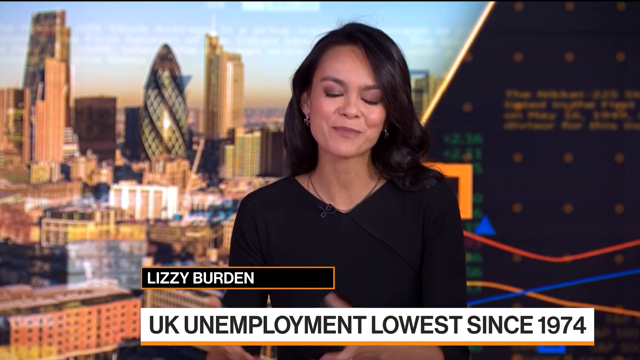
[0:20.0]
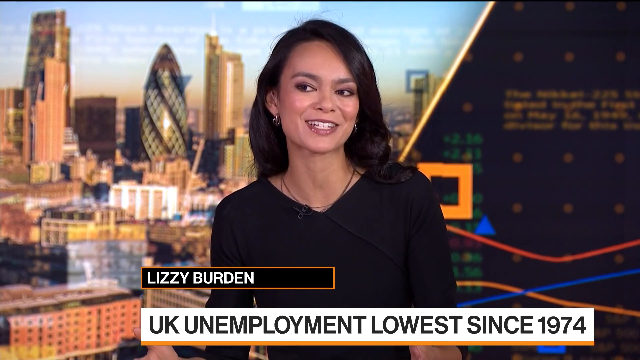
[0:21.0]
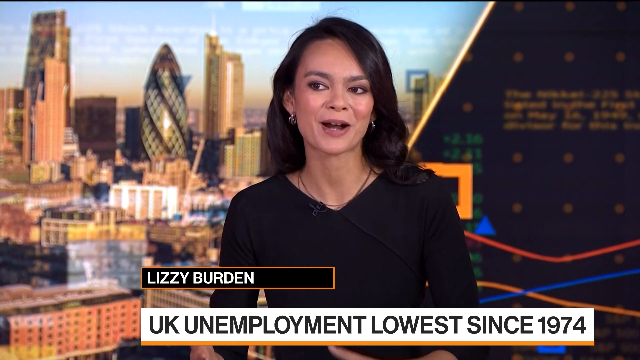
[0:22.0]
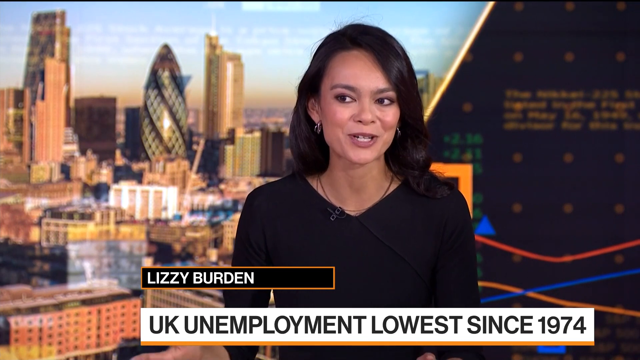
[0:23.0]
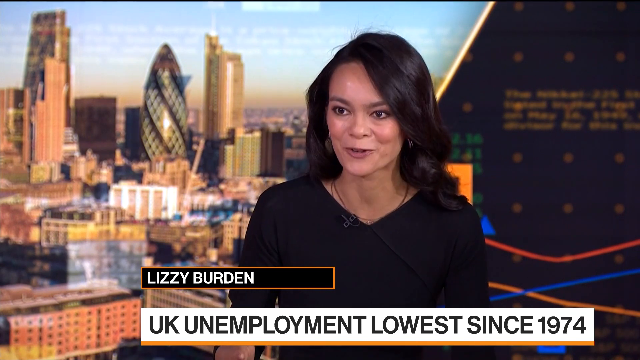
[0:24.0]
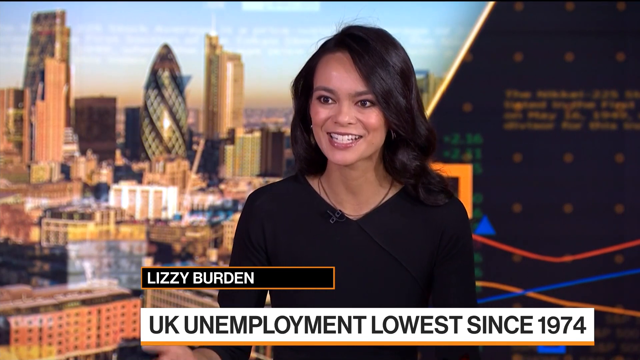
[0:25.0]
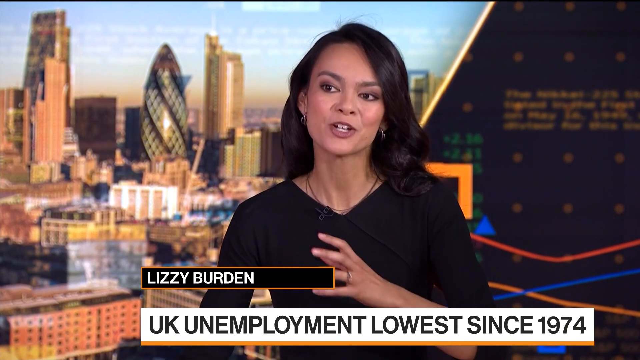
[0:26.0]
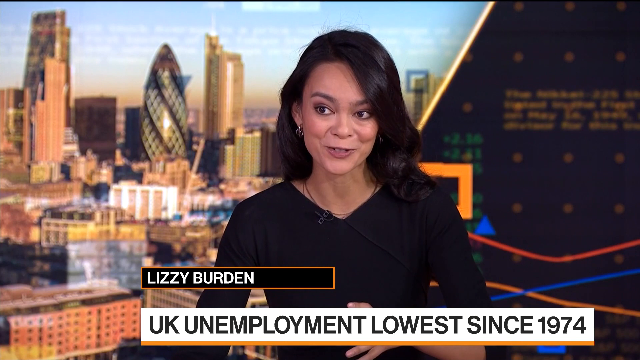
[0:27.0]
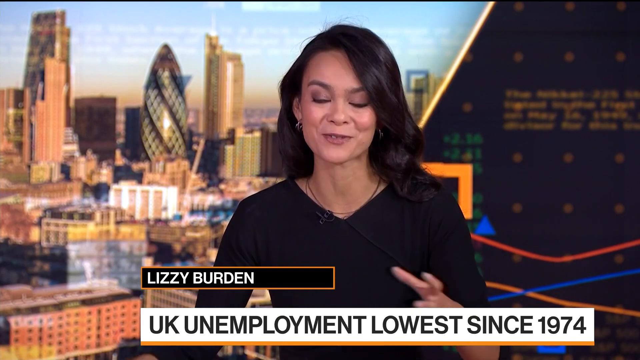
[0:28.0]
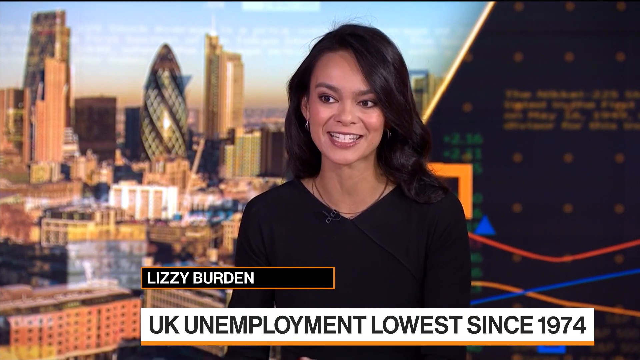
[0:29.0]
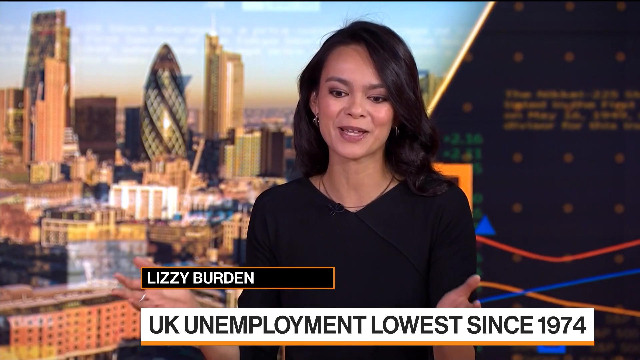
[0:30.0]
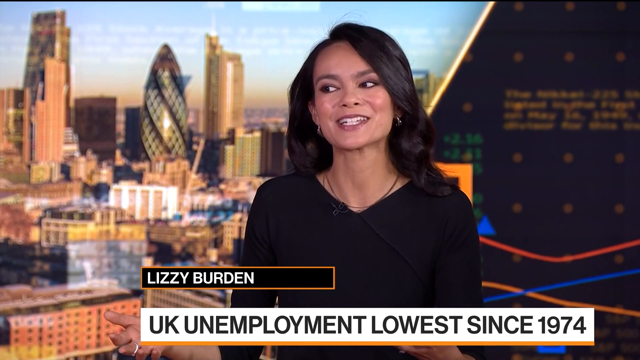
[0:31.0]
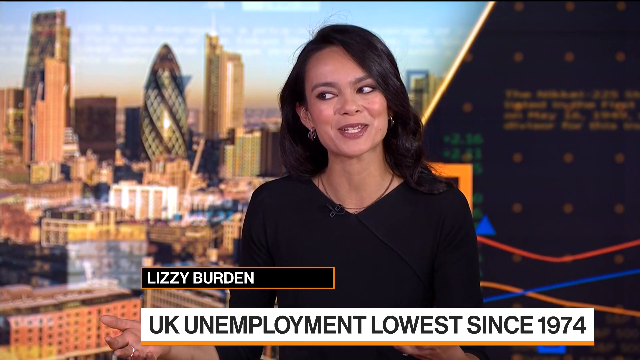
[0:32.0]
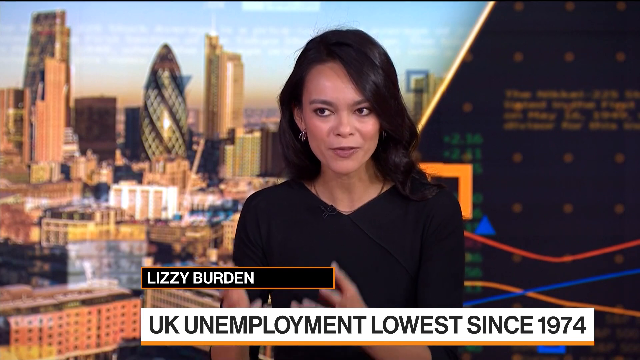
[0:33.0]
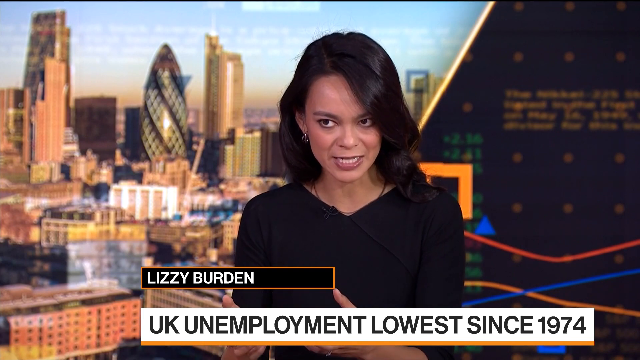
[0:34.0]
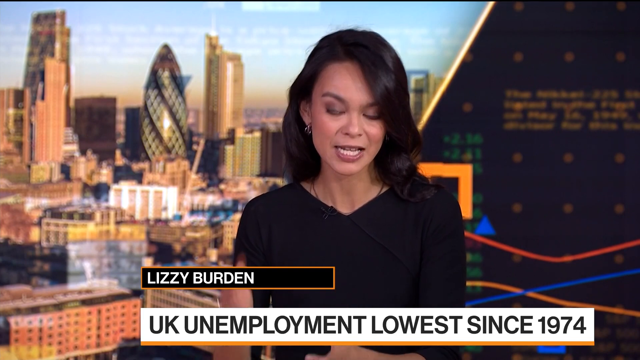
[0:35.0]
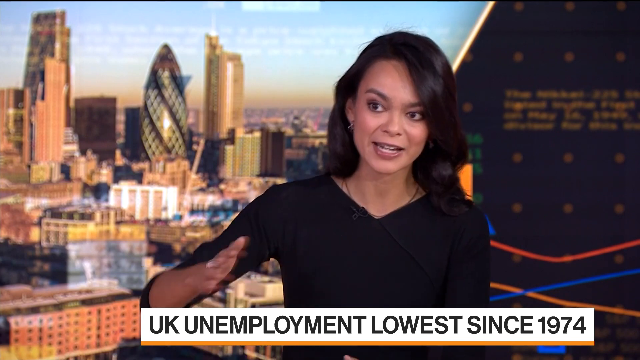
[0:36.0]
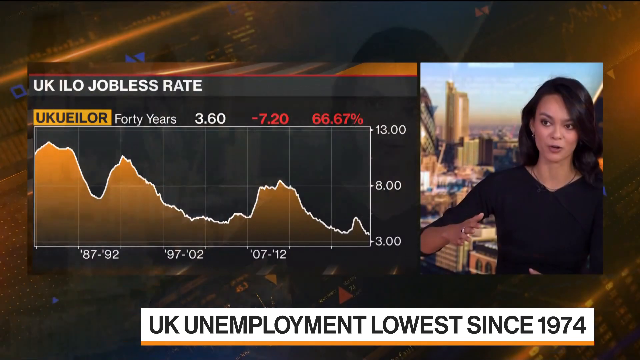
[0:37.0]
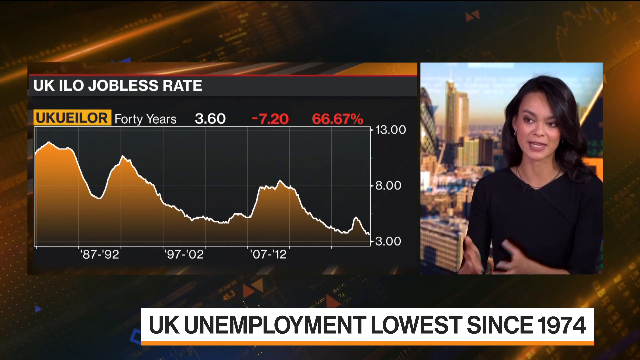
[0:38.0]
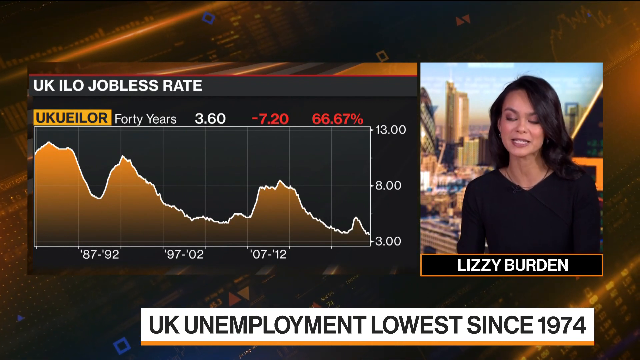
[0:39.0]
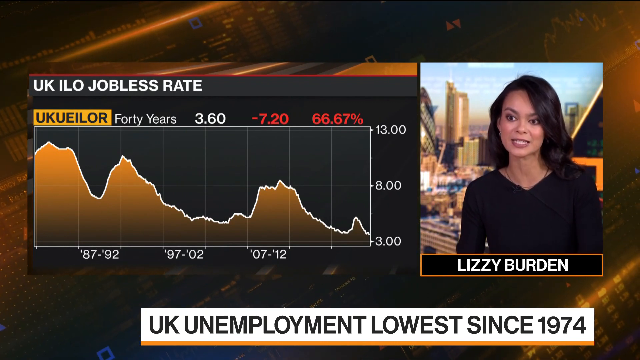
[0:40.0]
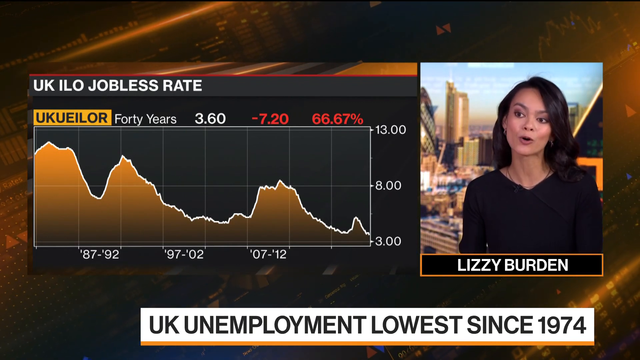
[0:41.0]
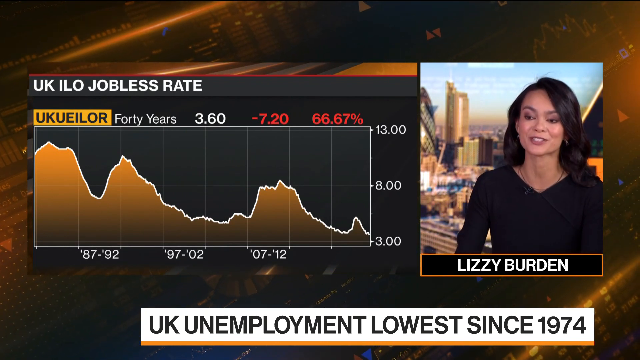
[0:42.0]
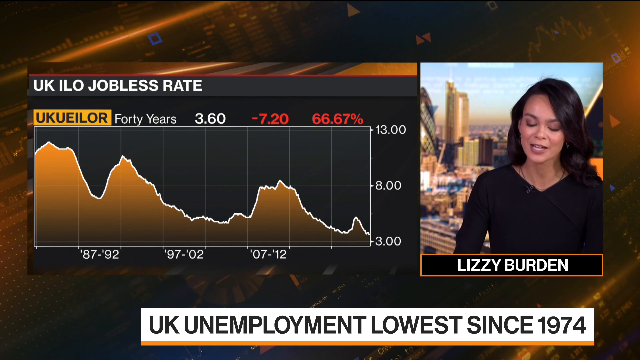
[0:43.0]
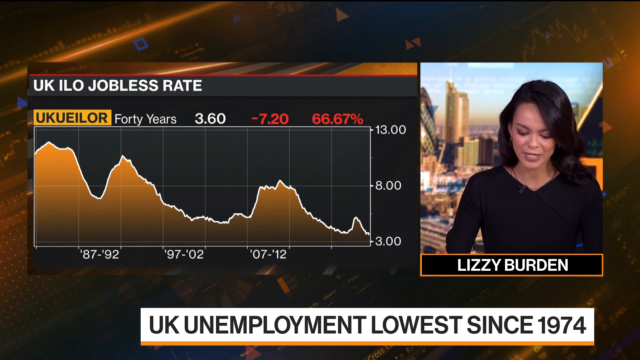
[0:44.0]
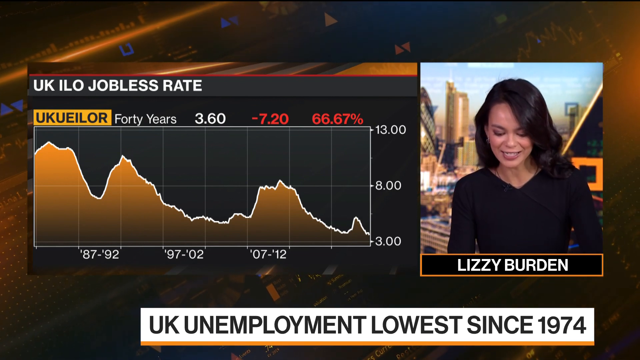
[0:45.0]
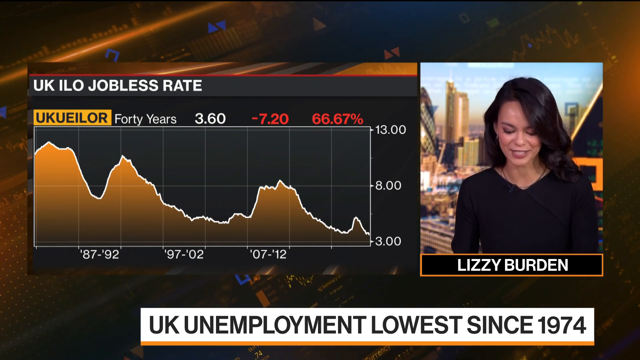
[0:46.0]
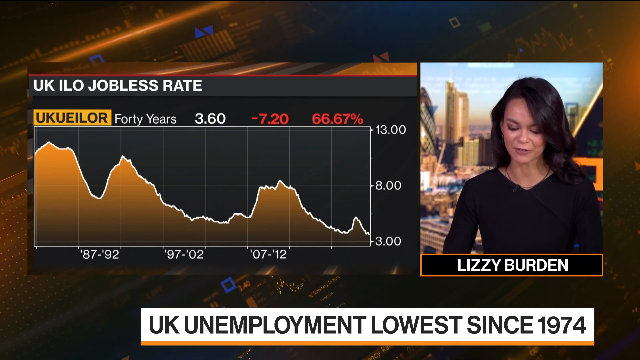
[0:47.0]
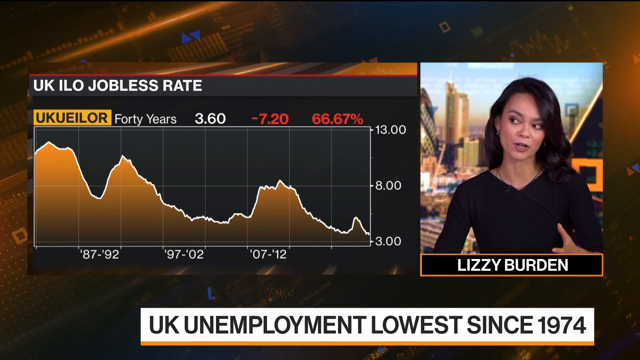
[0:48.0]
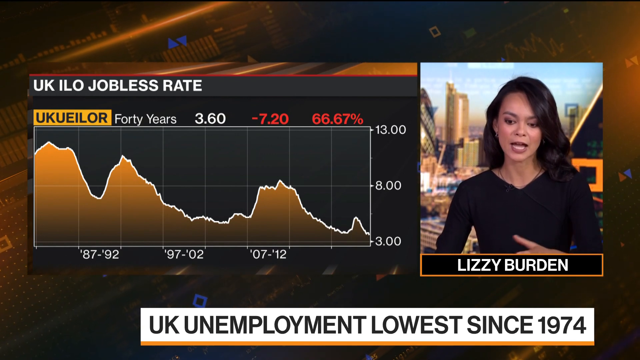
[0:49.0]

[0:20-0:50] Lizzie Burden is the only person on camera, but her gaze is directed toward other people in the studio. She nods her head up and down, makes expressive faces, appears very engaged, and uses her hands expressively as she talks. After a while the shot of her shrinks into a small box and UK job numbers come up, with text saying "unemployment lowest since 1974." A chart shows the "UK ILO jobless rate" over 40 years, with the figures 3.60, minus 7.20 and 66.67% down. The chart is somewhat hard to read; its line resembles a slowly descending roller coaster, starting off very high, dipping, bouncing back up, and then slowly rolling down to the bottom. The range along the chart is marked 87, 92, 97, 02, apparently in sections of about five years each.